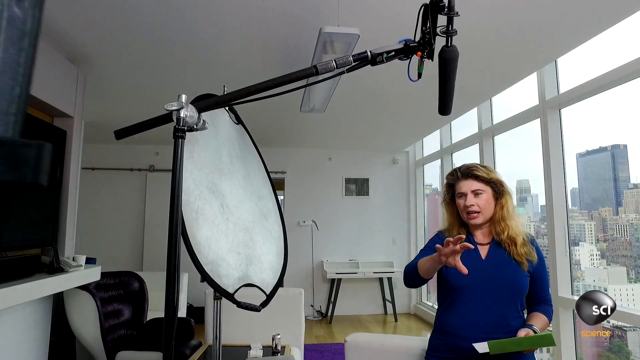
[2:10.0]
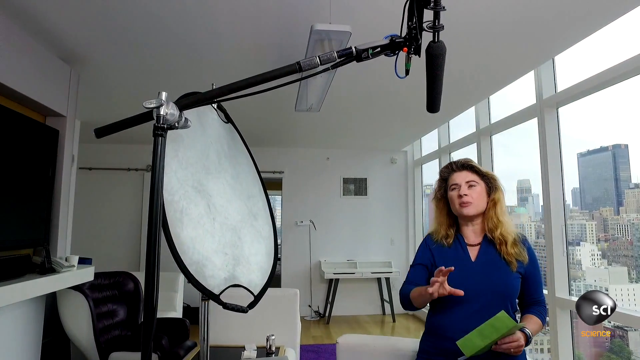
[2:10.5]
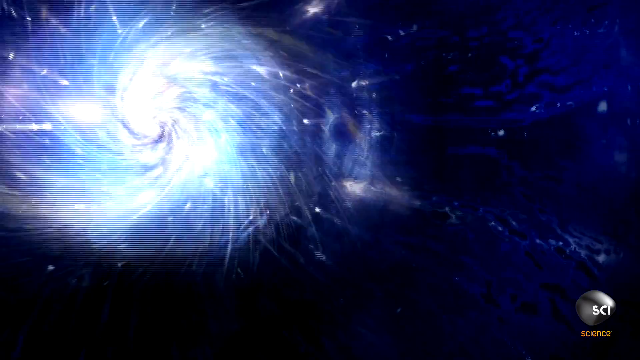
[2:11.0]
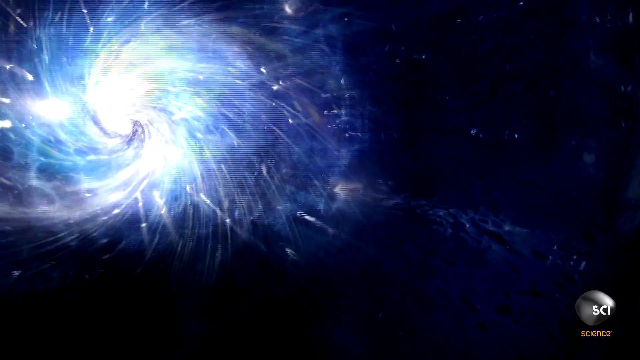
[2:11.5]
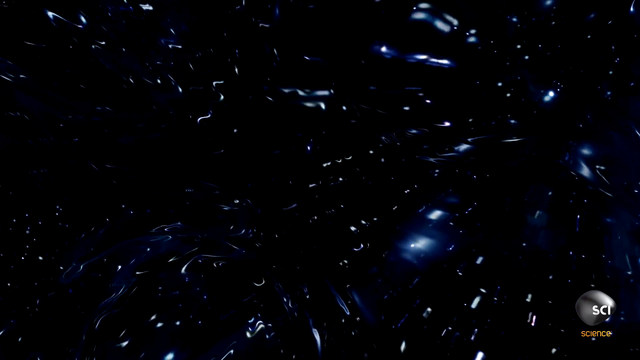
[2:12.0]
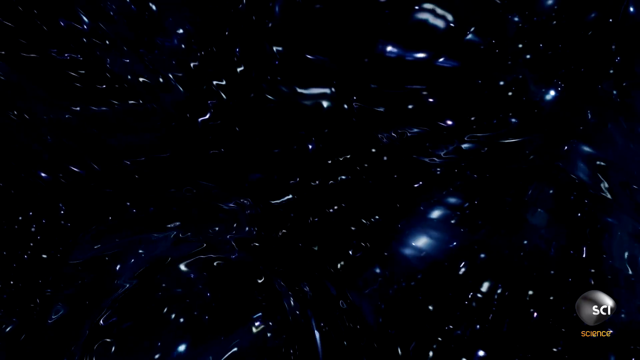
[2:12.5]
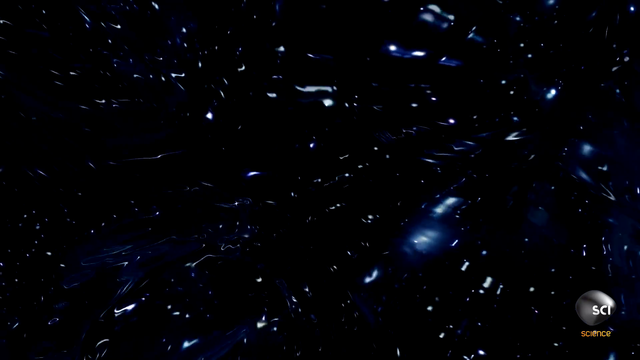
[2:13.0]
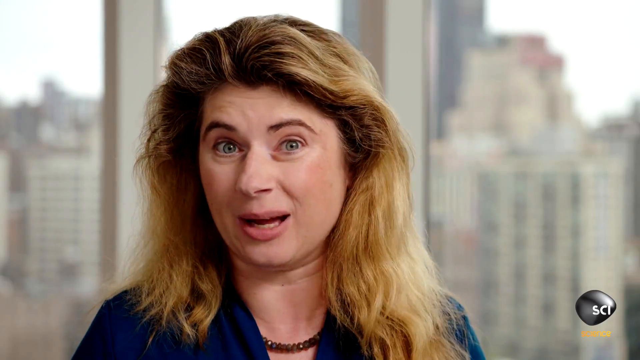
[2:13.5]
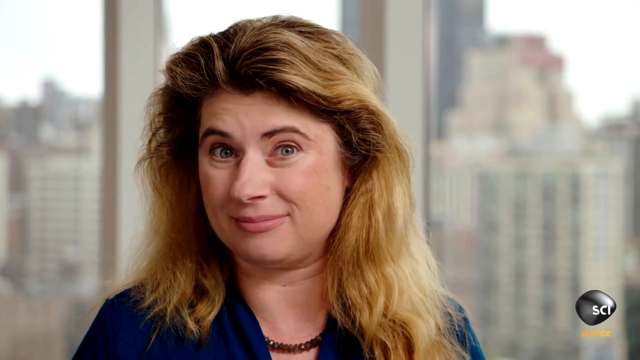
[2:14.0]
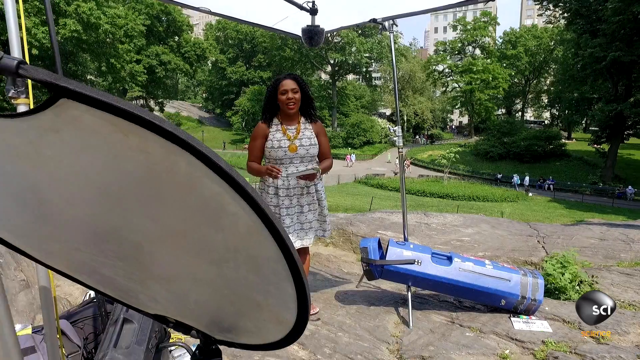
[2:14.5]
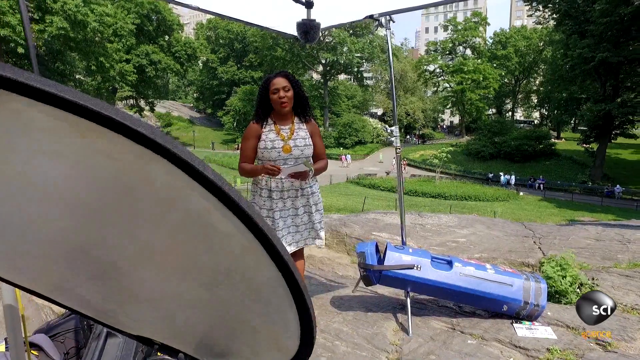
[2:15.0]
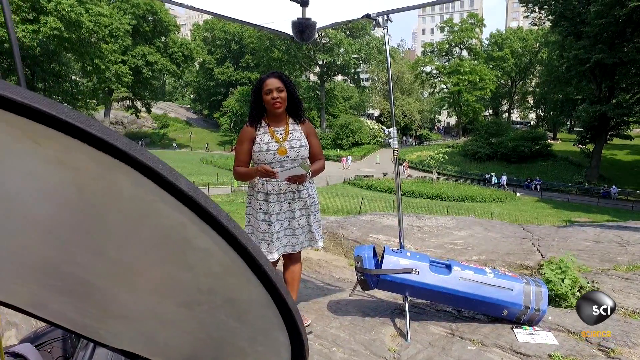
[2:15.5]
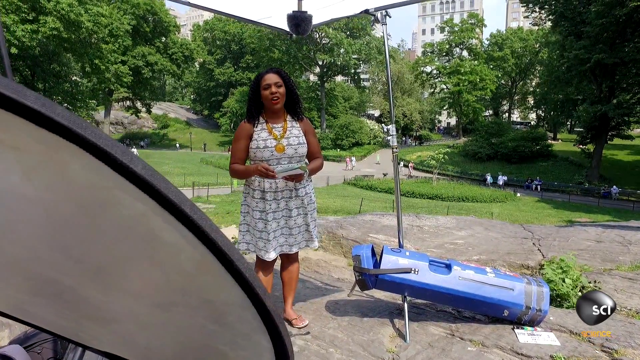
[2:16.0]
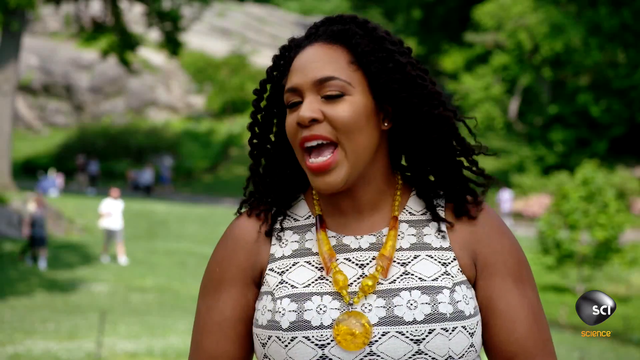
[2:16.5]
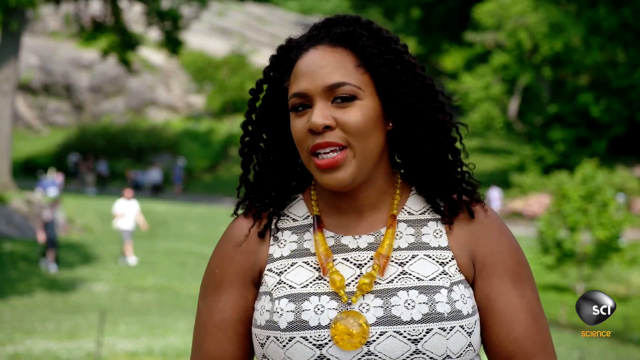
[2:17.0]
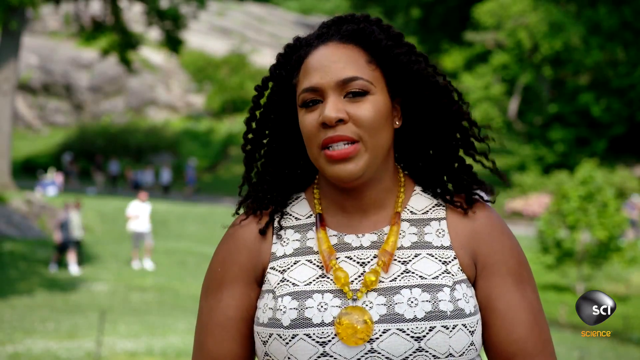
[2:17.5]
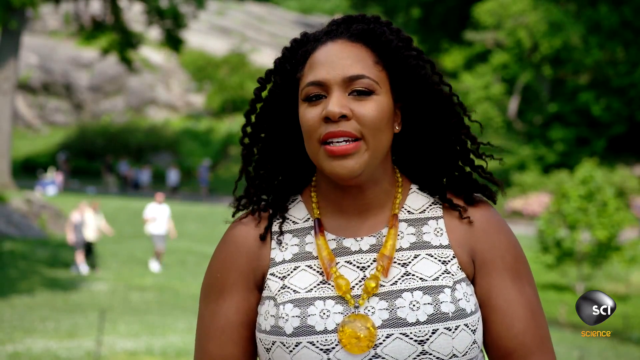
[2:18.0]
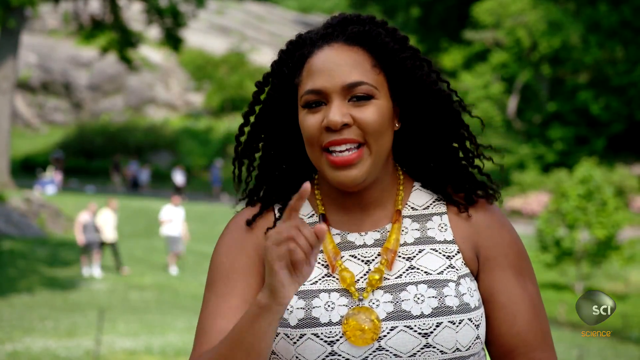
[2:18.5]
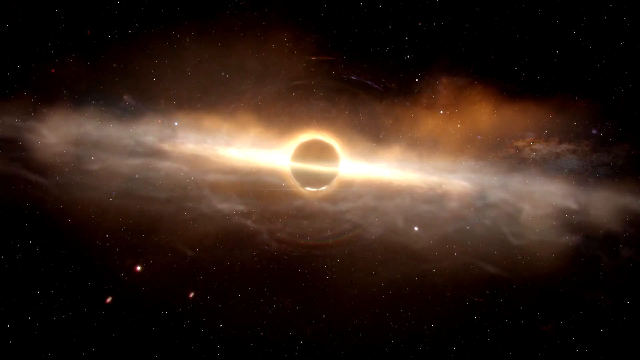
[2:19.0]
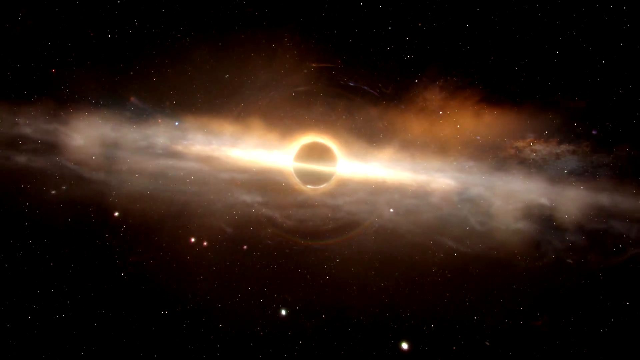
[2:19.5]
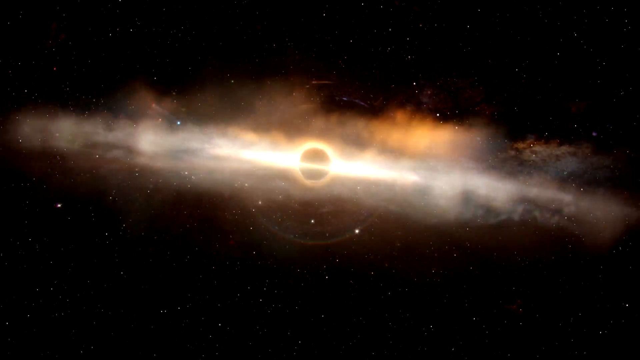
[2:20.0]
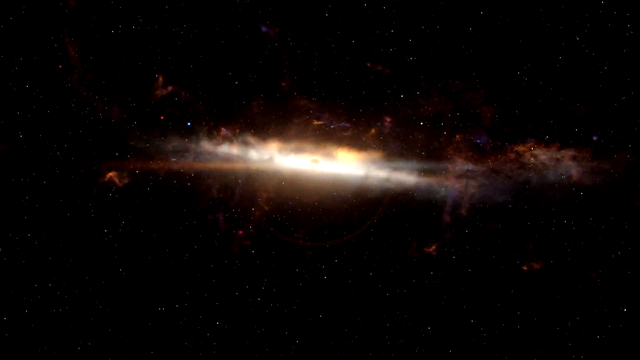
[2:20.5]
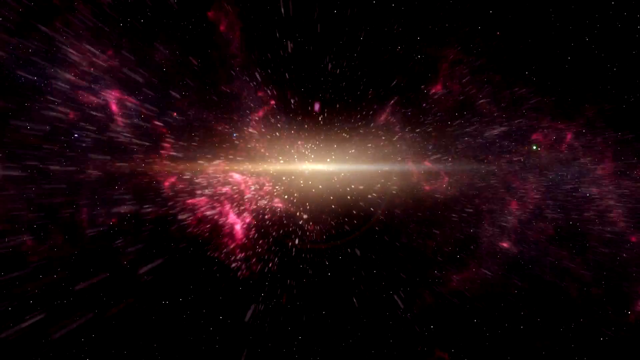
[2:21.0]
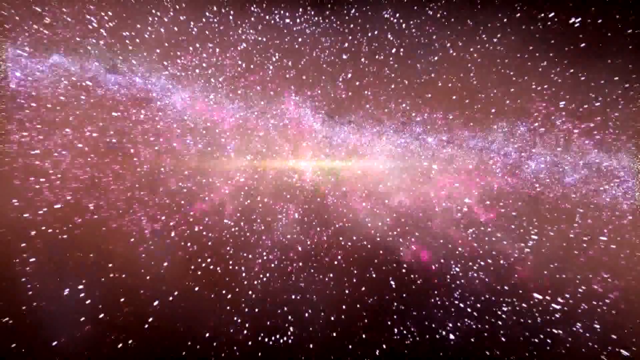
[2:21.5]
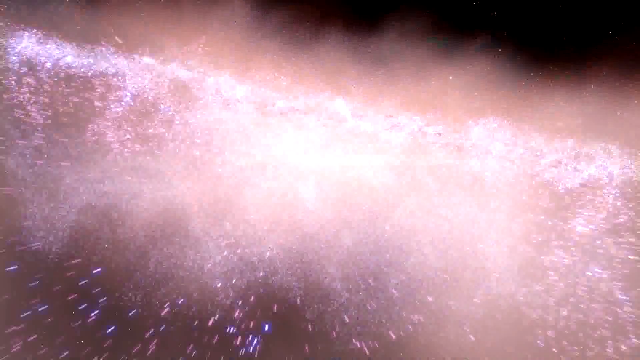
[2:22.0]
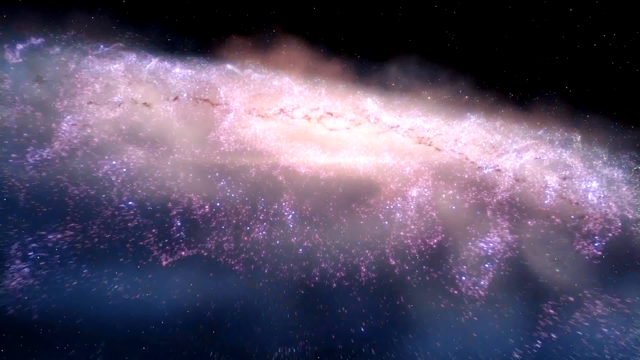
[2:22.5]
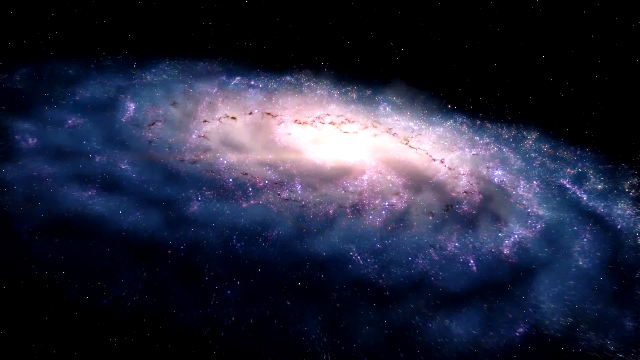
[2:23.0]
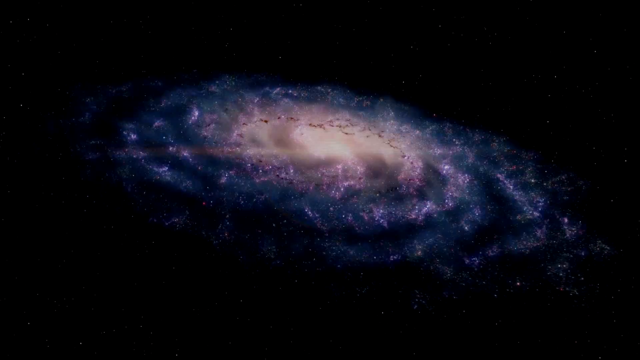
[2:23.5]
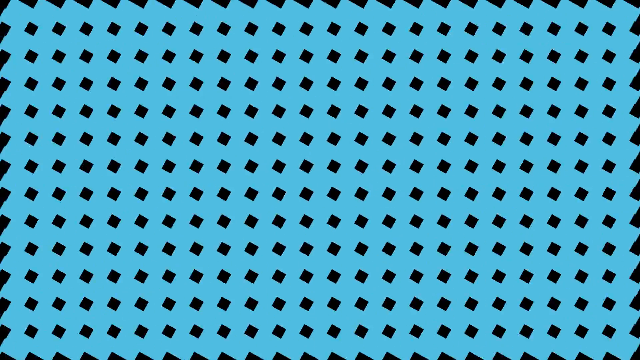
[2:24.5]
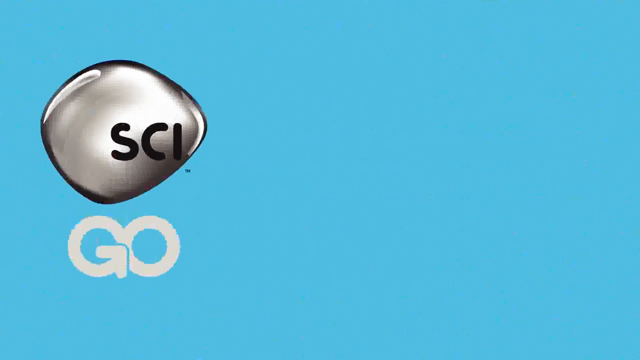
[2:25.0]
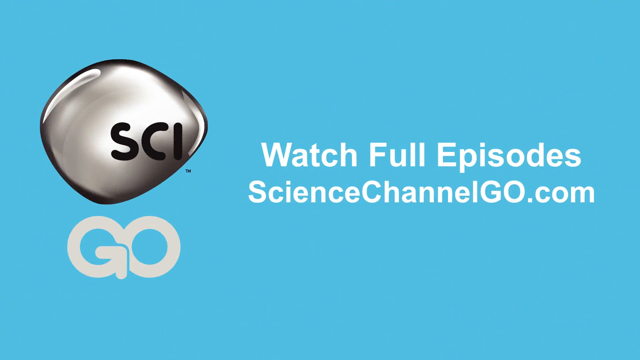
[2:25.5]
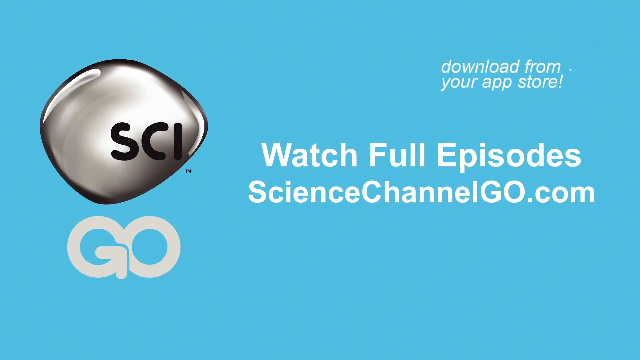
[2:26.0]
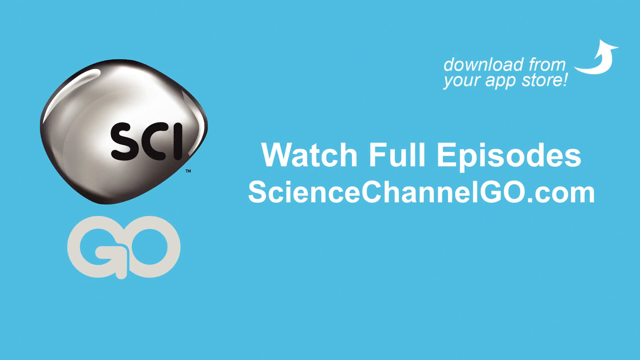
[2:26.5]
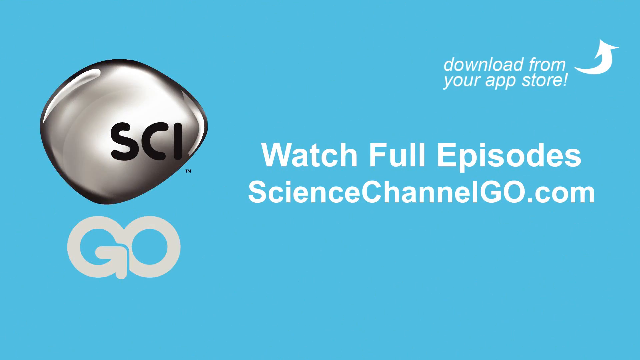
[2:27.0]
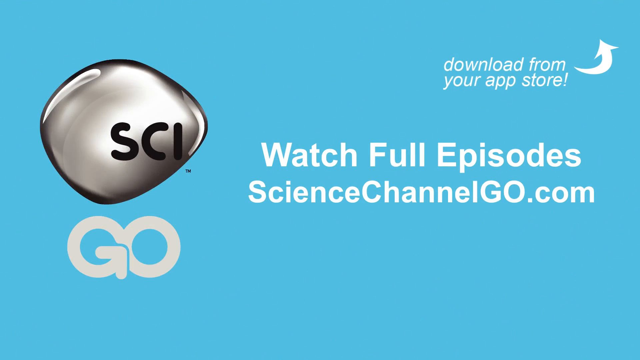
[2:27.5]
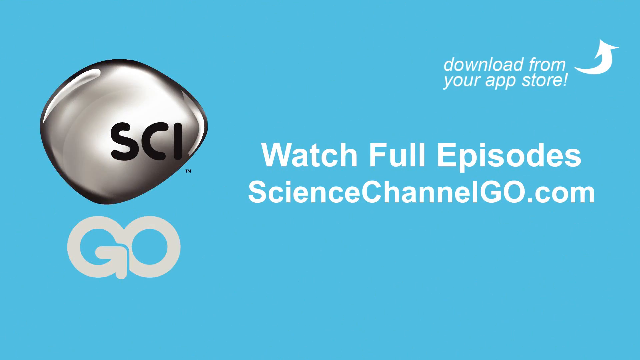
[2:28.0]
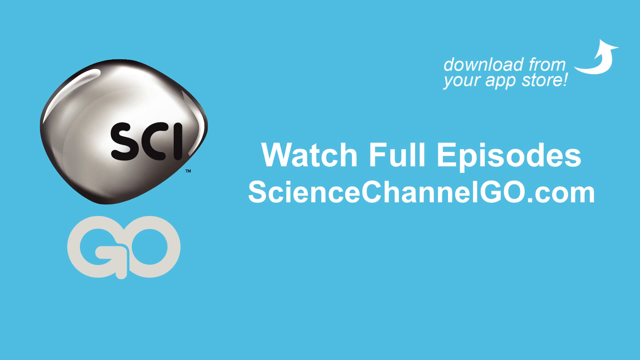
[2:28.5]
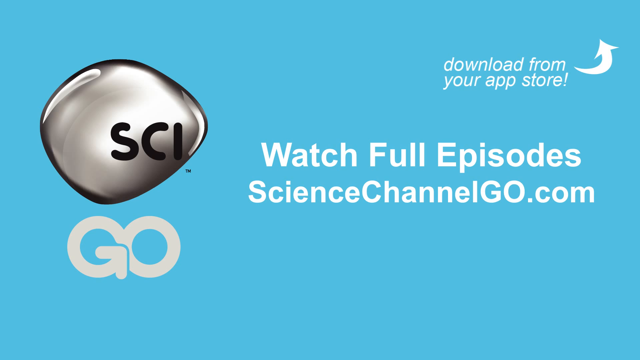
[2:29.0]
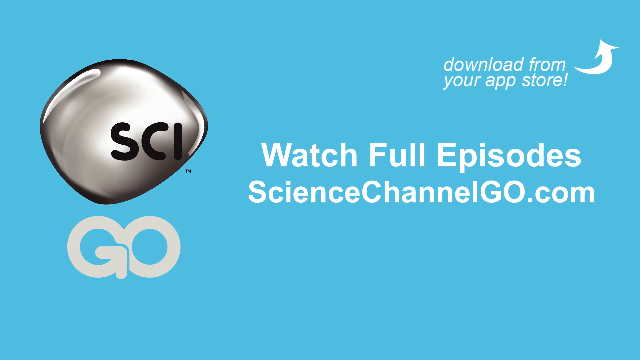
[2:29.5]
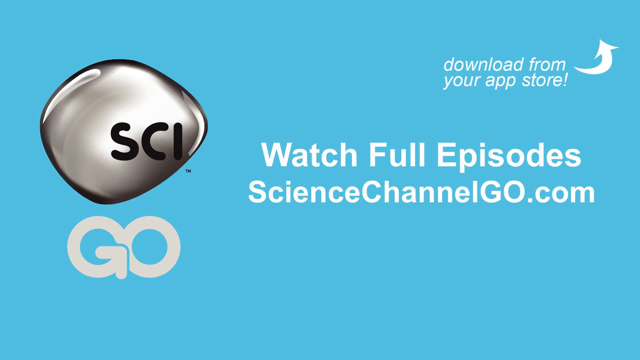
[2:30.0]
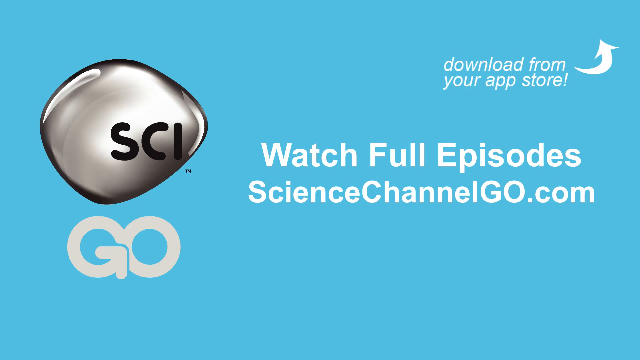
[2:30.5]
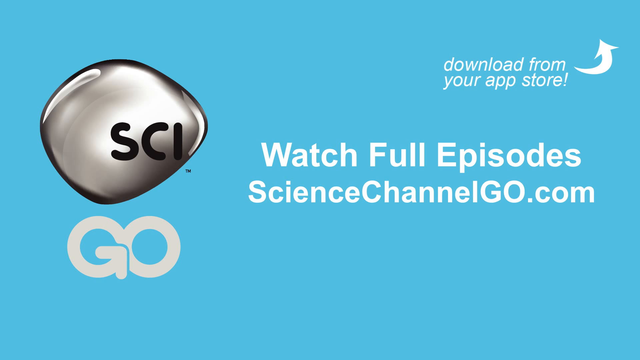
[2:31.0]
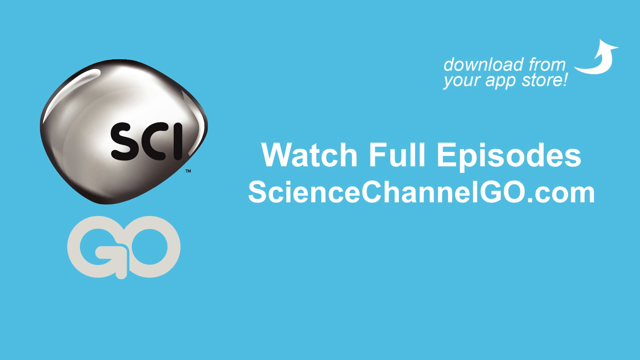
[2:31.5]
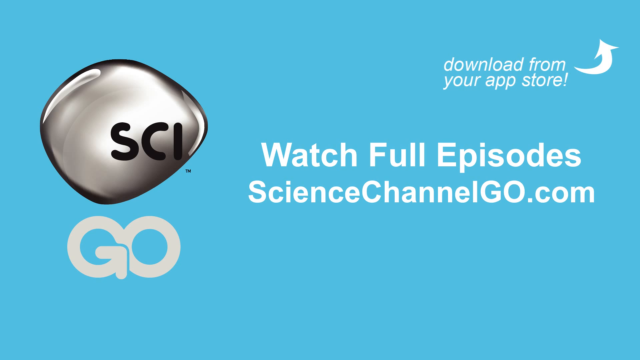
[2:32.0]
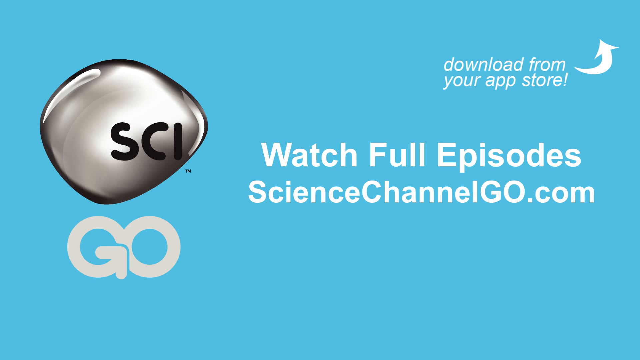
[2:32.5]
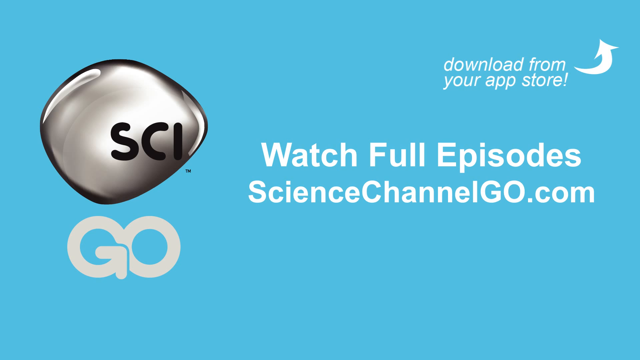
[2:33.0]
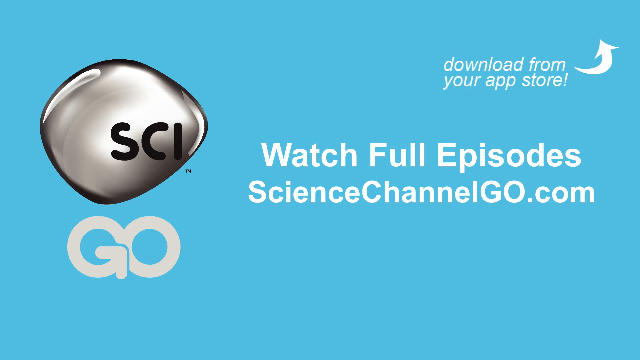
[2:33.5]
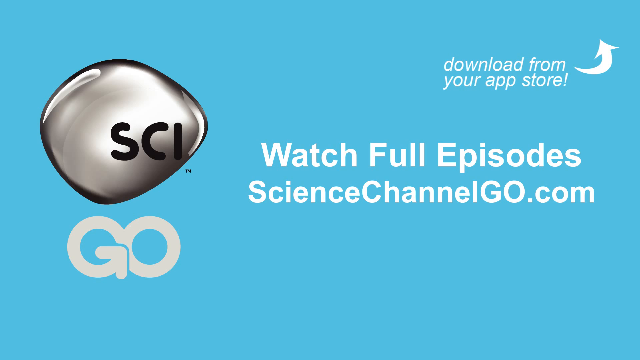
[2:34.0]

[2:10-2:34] A woman stands in front of a microphone that is over her head, in a pristine and very well put together home with the city skyline visible in the background. She wears a blue dress and a necklace and has red hair. She waves her arms as she looks toward the left side of the frame and speaks. An image of a black hole in space follows, then a close-up of the face of the woman in the blue dress as she speaks to the viewer before shaking her head ever so slightly. The video switches as it zooms in on the woman in the white dress, then shows a close-up of her; several people are visible in the background of the park. She says a few words and then brings up her right hand to point. A 3D depiction of a black hole appears, and the view zooms far away from it until a 3D-generated depiction of the galaxy is shown. The video fades to black and then switches to a teal background. On the right side is a silver SCI logo, with the logo for GO beneath it. To the right of these, white text reads "Watch Full Episodes ScienceChannelGo.com". White text then appears in the upper right corner reading "download from your app store!", along with a white arrow curving right and up.